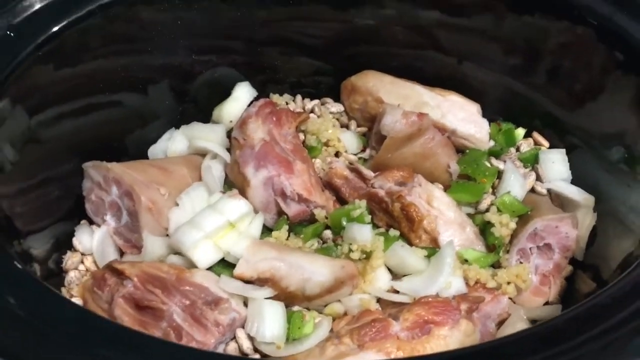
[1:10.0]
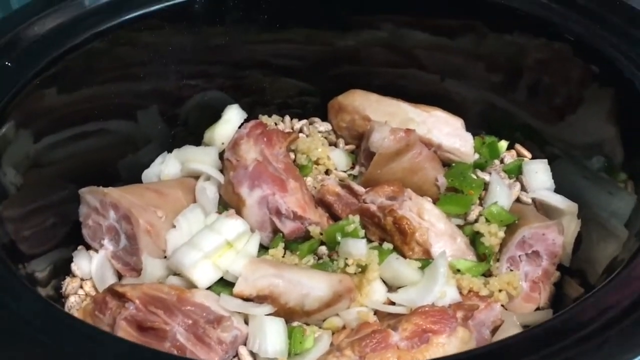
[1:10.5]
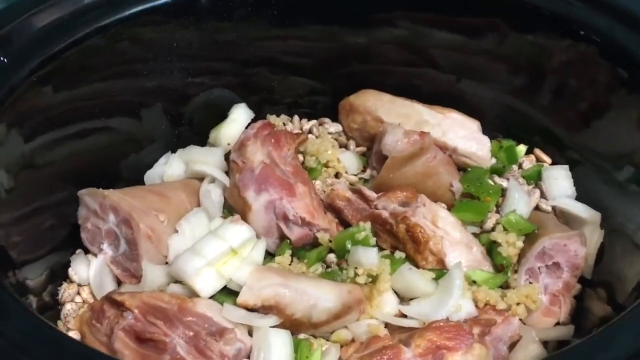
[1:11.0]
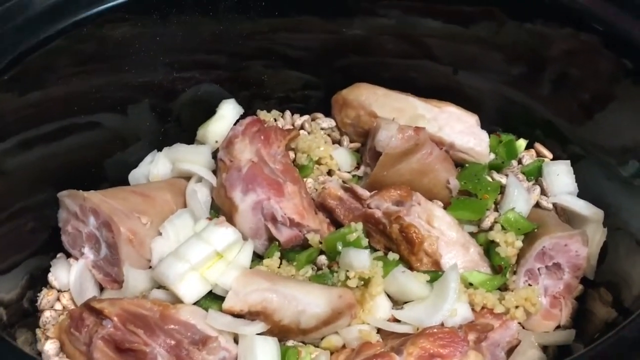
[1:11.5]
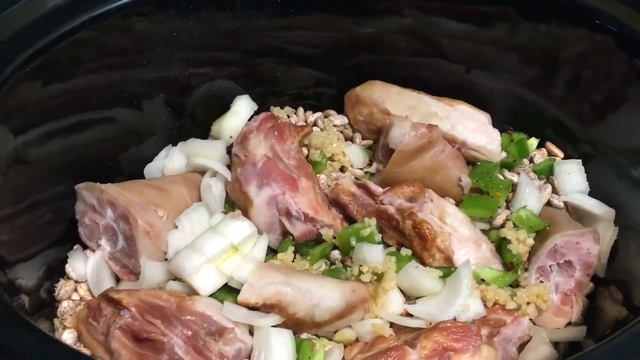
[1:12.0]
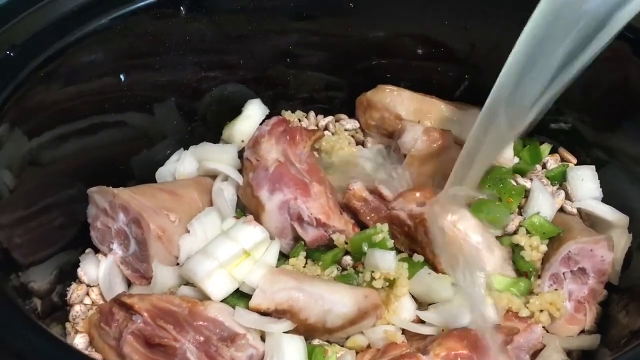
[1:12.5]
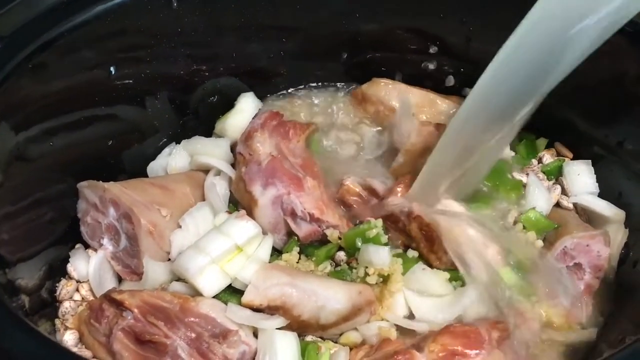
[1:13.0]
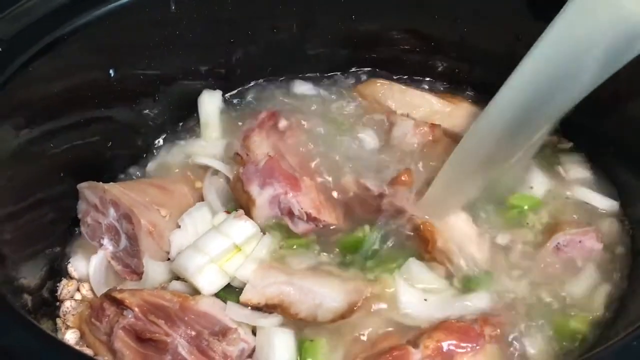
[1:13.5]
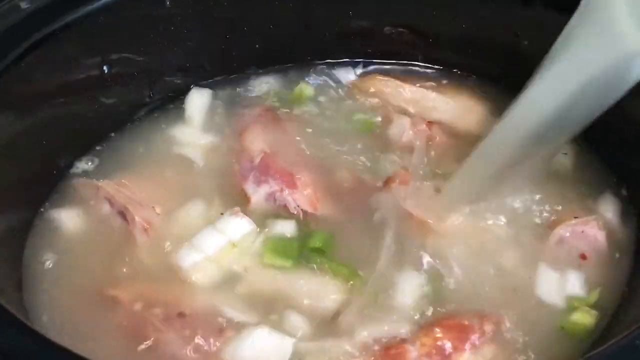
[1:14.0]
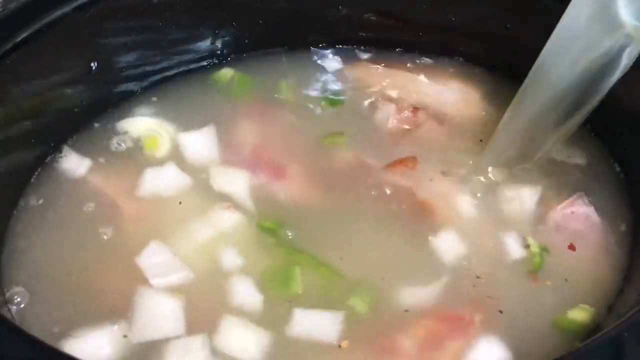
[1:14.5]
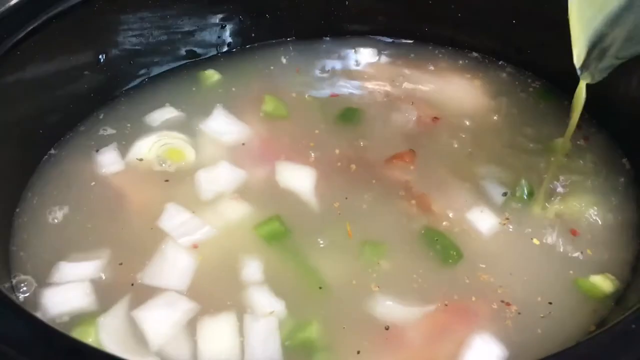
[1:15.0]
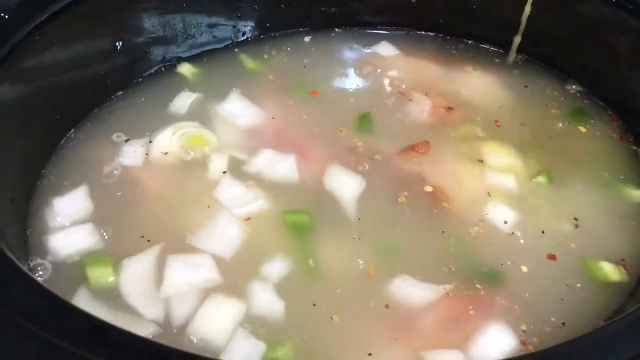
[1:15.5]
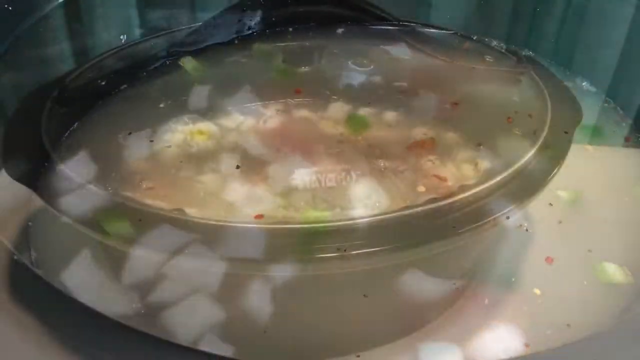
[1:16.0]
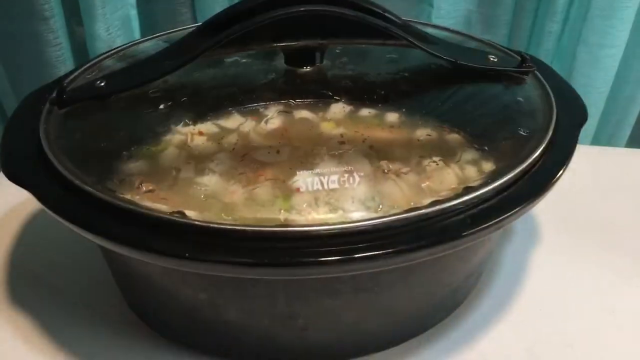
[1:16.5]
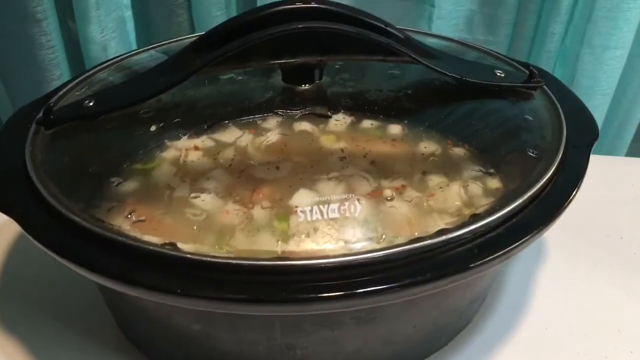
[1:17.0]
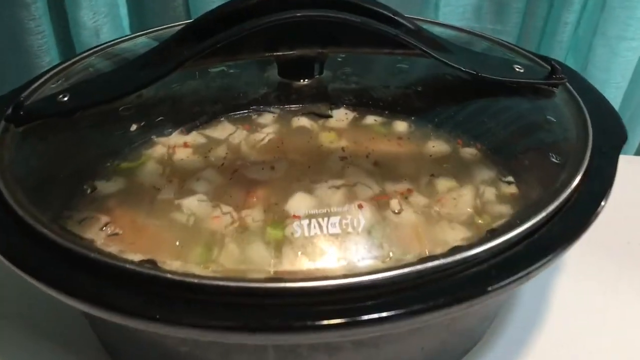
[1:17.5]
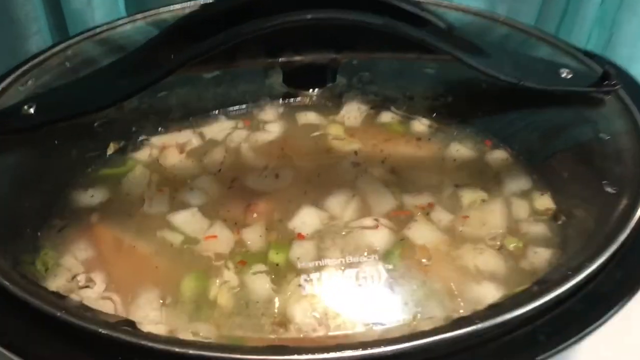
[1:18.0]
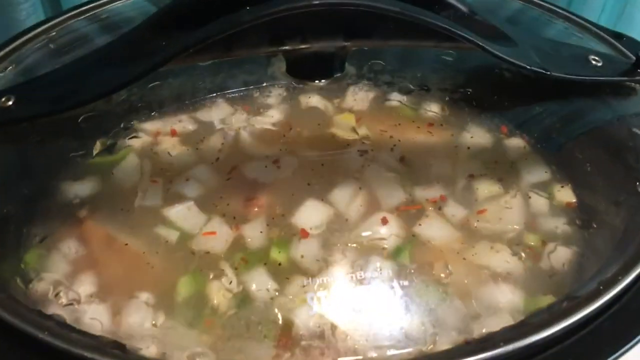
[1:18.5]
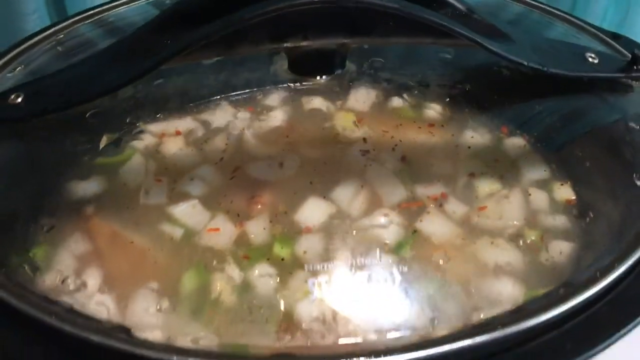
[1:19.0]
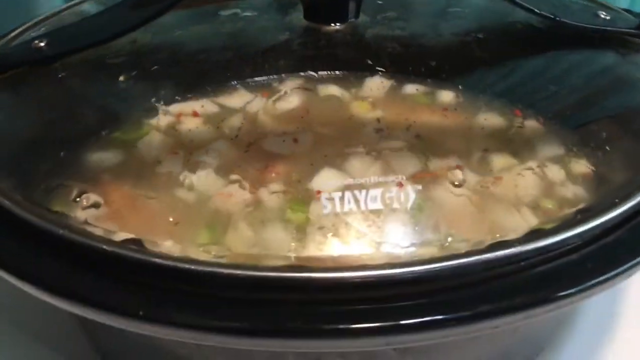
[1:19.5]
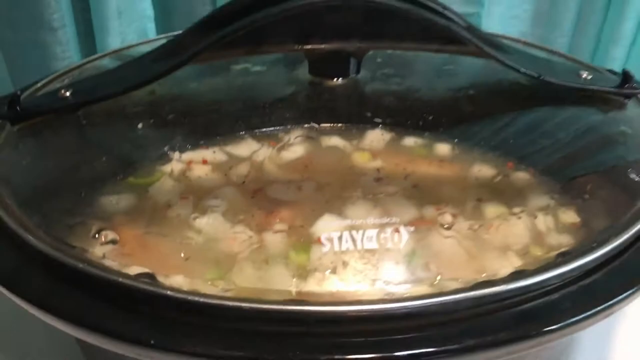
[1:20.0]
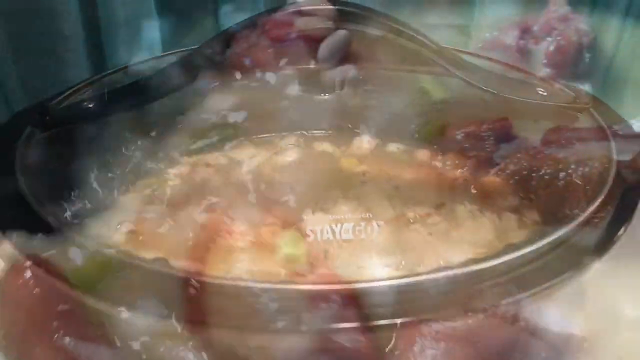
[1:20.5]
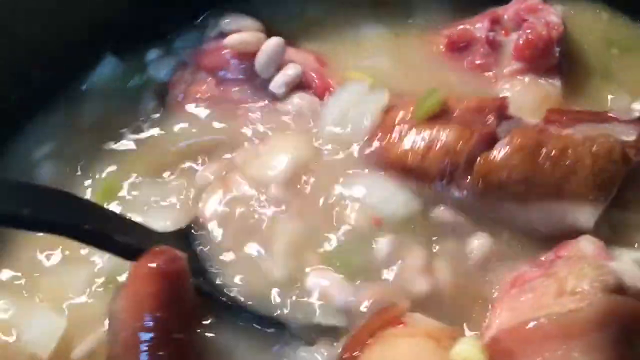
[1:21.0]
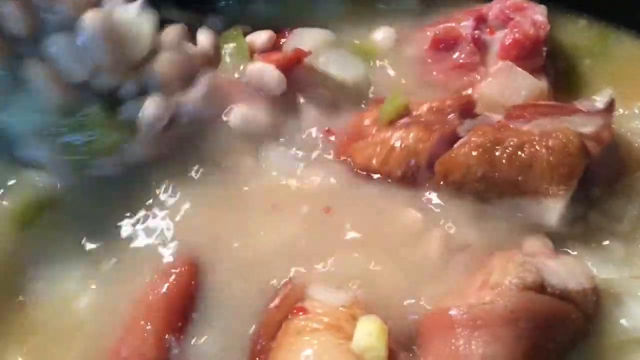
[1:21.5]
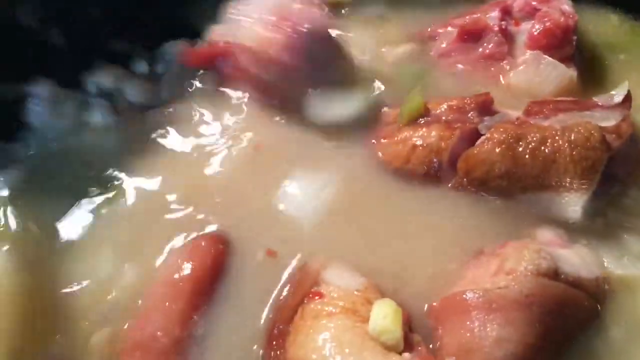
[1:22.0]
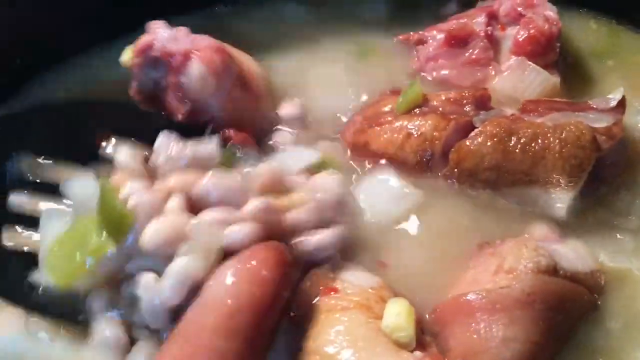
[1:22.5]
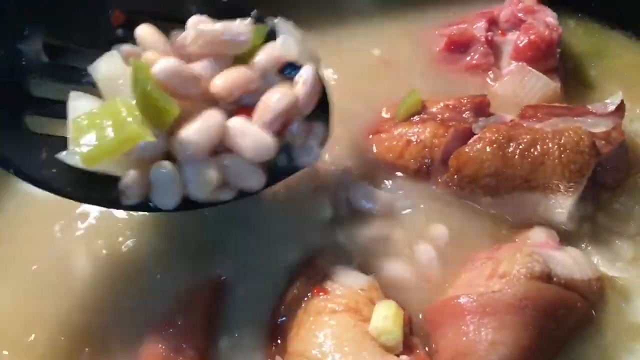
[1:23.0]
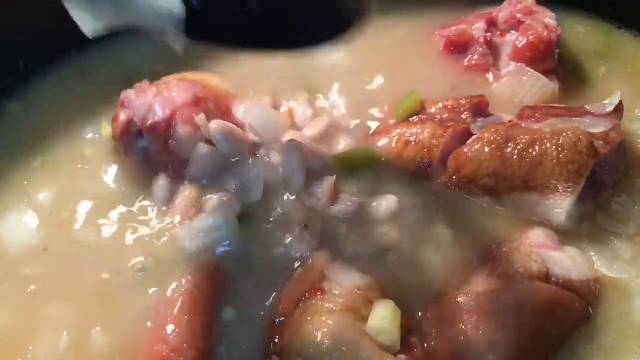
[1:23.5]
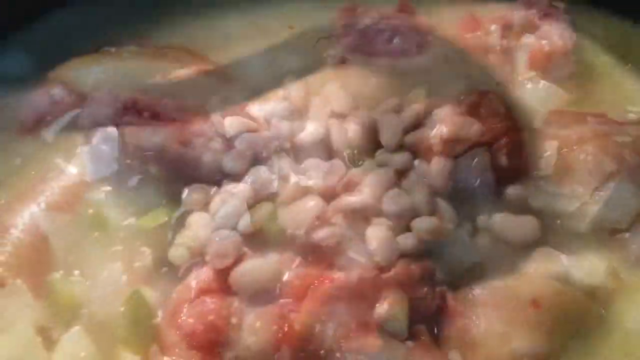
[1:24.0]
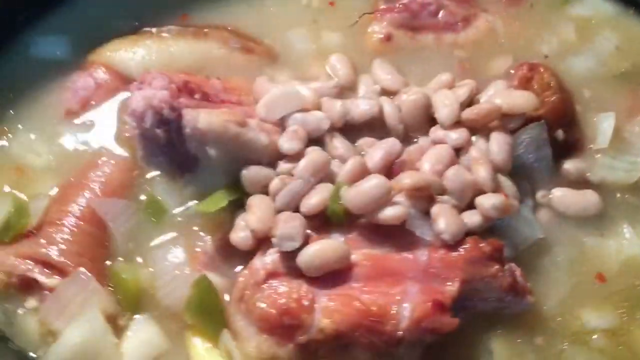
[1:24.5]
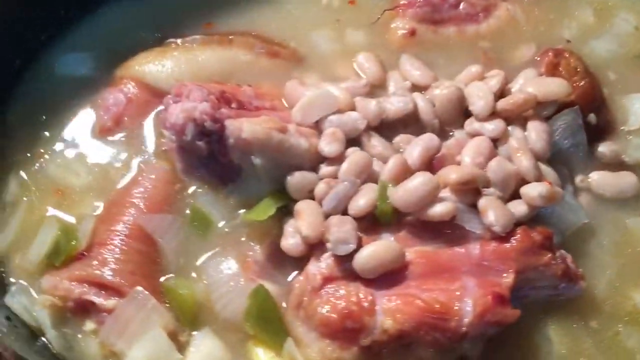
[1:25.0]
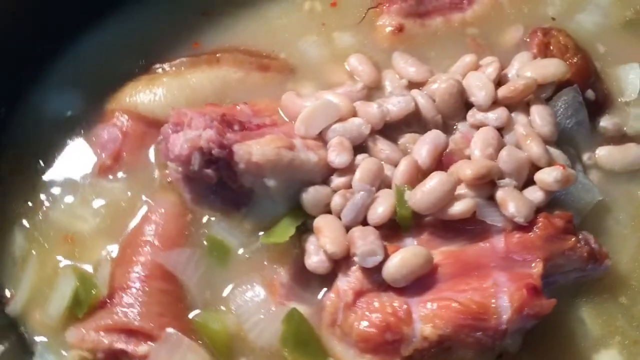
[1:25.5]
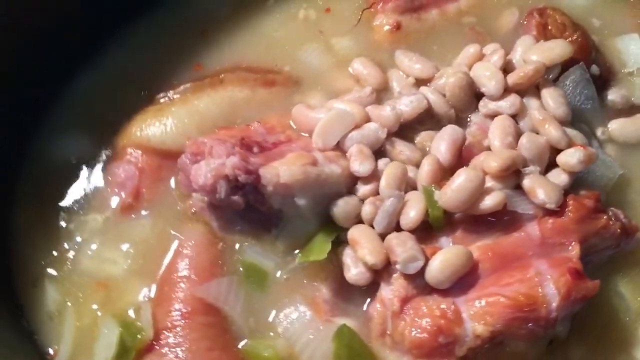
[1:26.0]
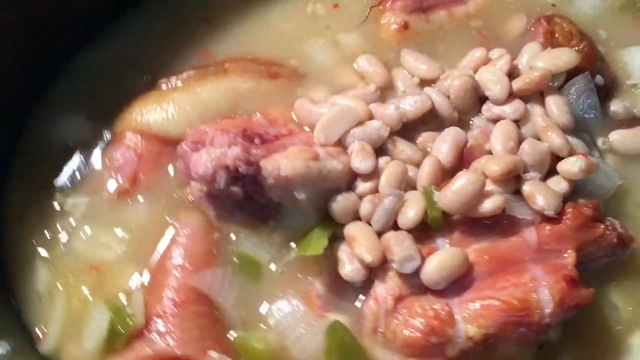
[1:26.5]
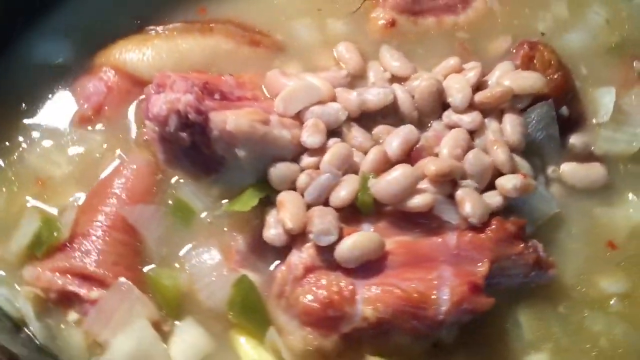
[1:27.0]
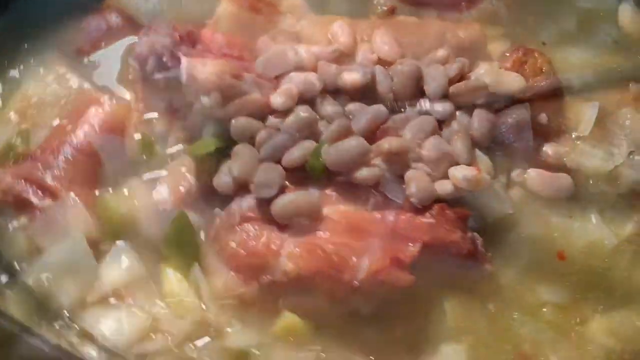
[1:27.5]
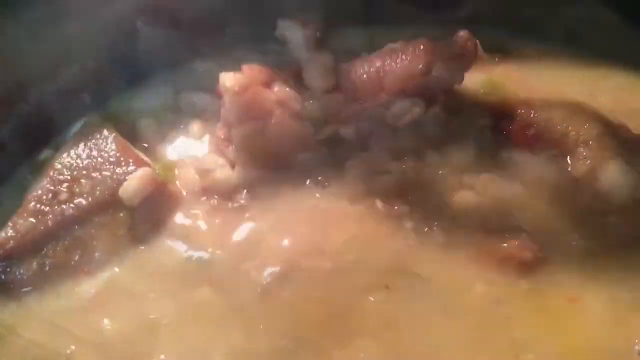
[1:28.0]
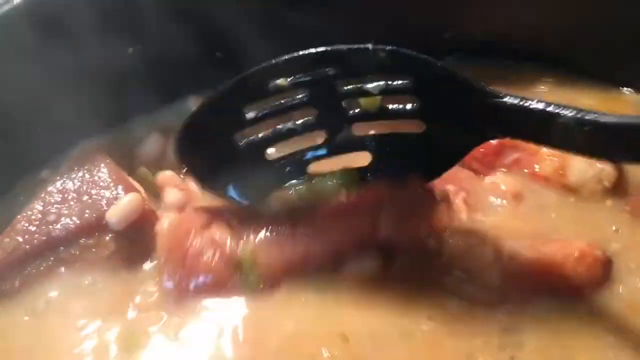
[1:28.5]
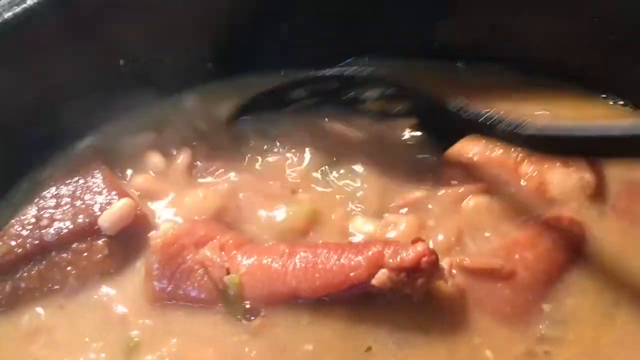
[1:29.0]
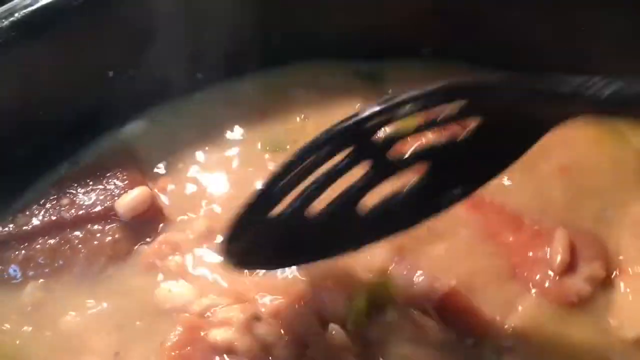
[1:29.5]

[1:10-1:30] Lemon juice is added so that it covers the ingredients in the pot. The pot is placed on the fire and stirred. The beans become soft and the meat becomes tender.